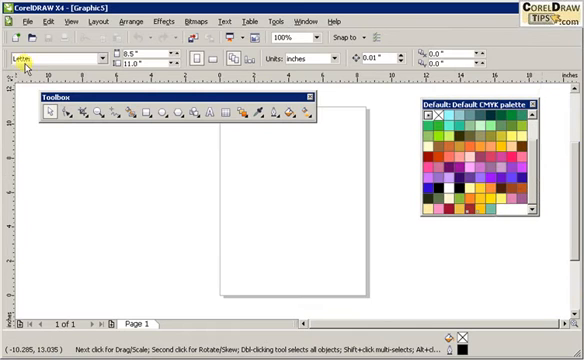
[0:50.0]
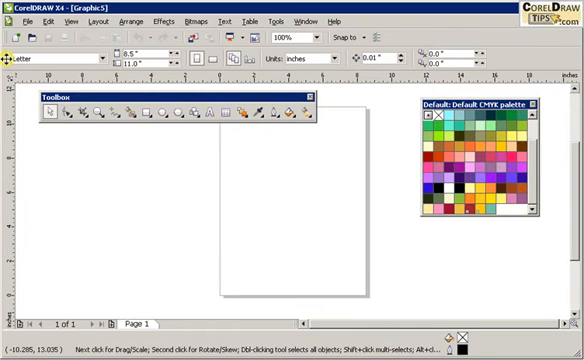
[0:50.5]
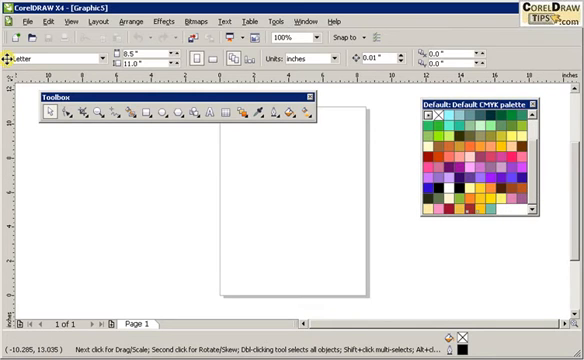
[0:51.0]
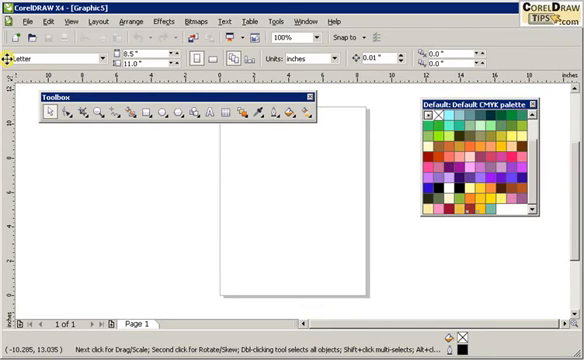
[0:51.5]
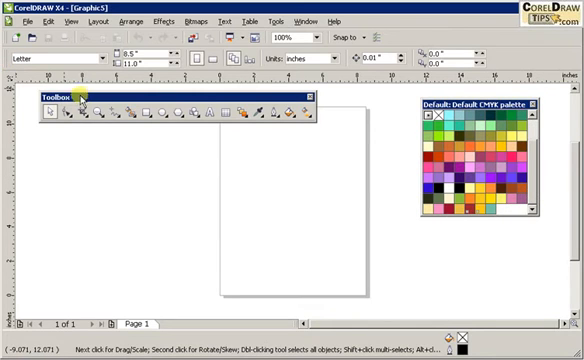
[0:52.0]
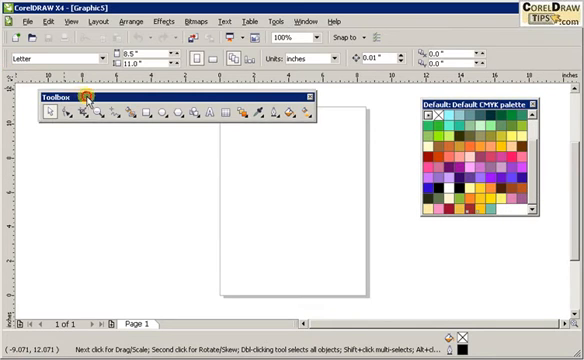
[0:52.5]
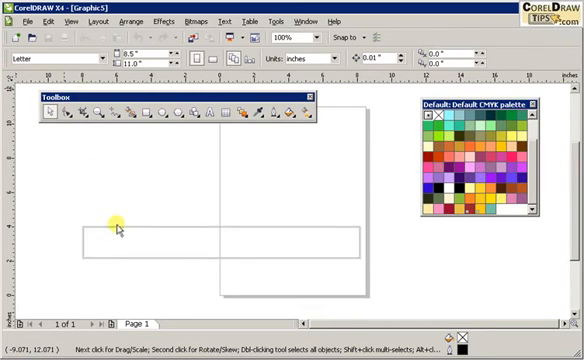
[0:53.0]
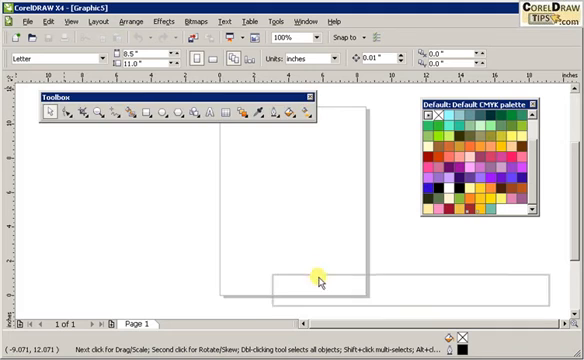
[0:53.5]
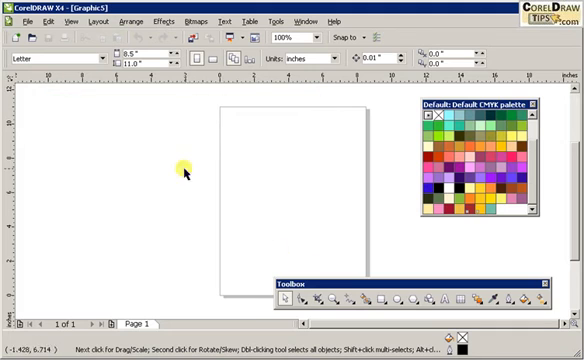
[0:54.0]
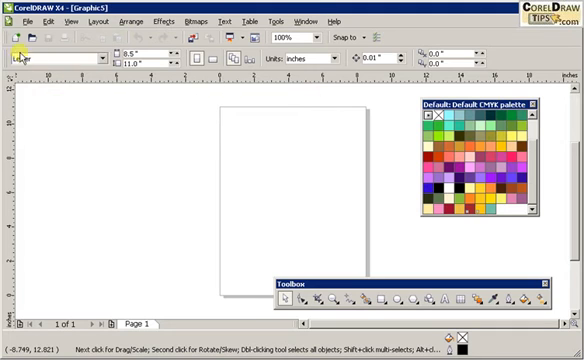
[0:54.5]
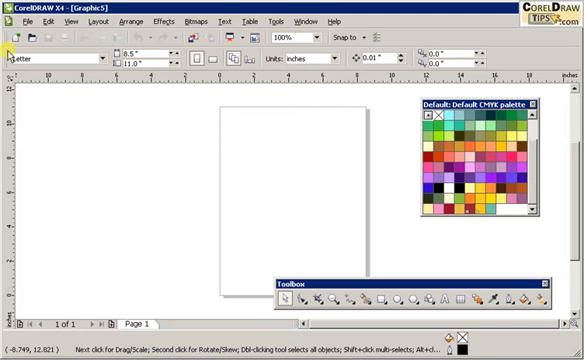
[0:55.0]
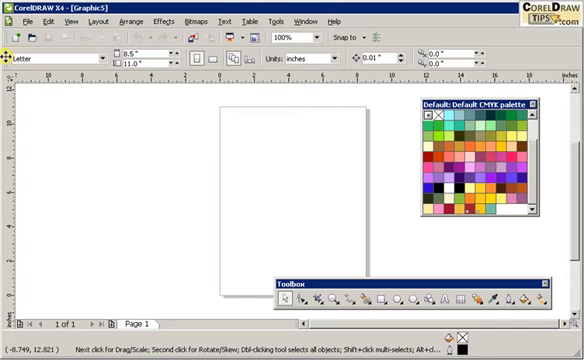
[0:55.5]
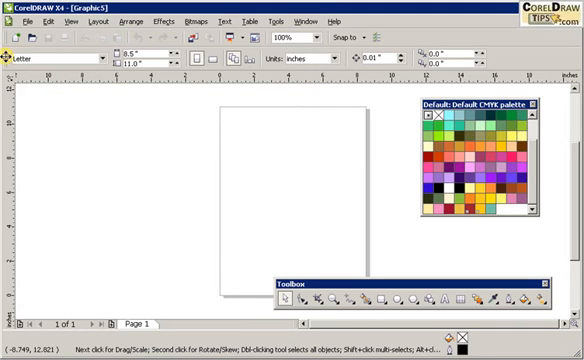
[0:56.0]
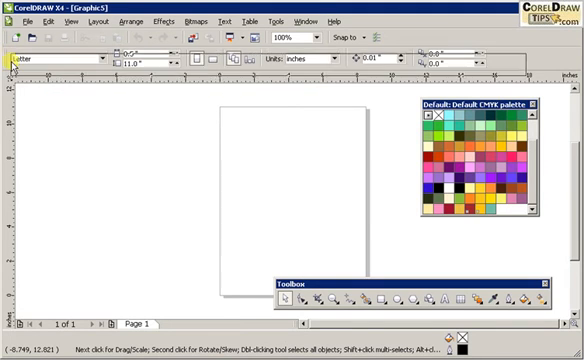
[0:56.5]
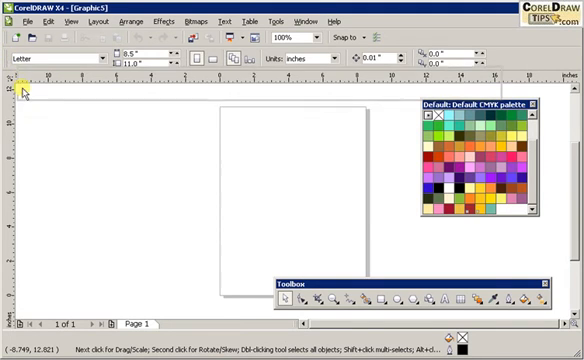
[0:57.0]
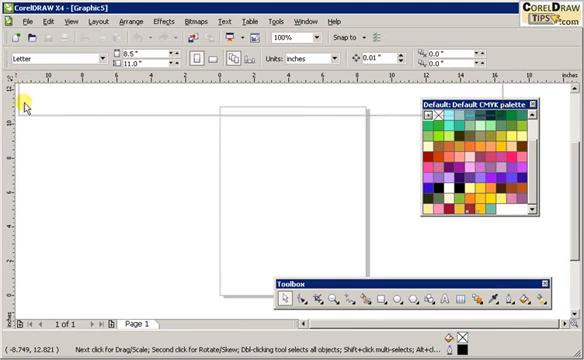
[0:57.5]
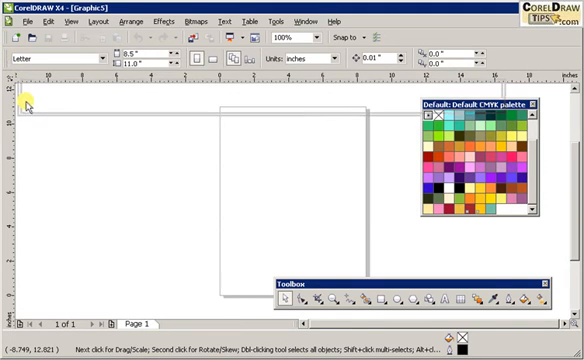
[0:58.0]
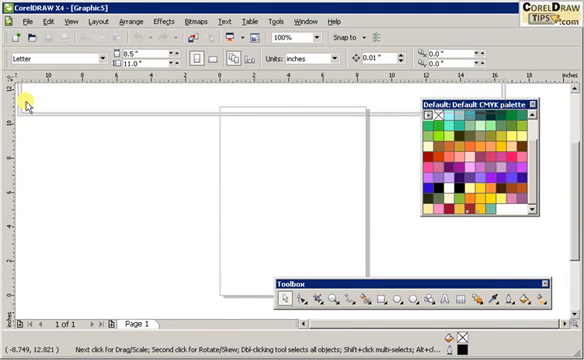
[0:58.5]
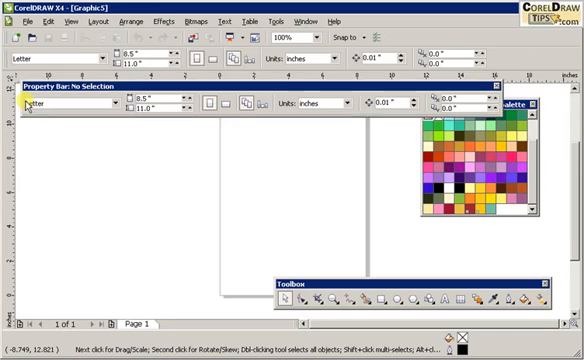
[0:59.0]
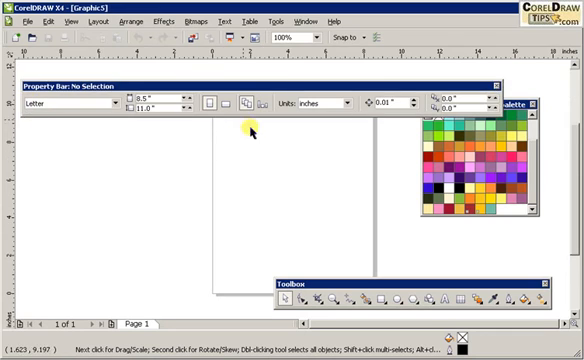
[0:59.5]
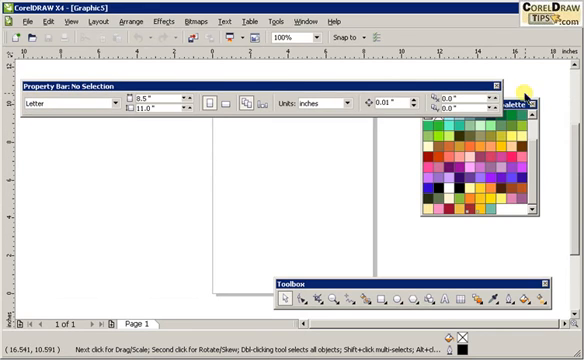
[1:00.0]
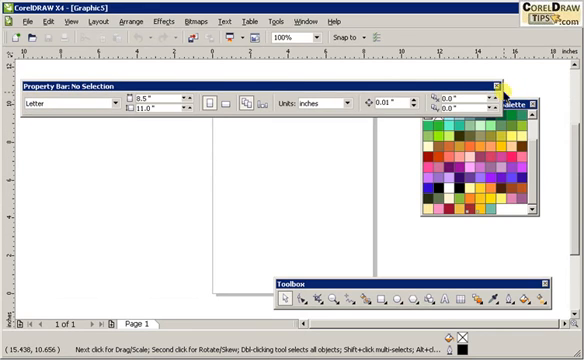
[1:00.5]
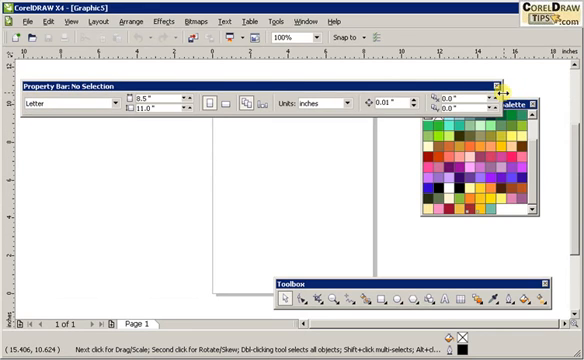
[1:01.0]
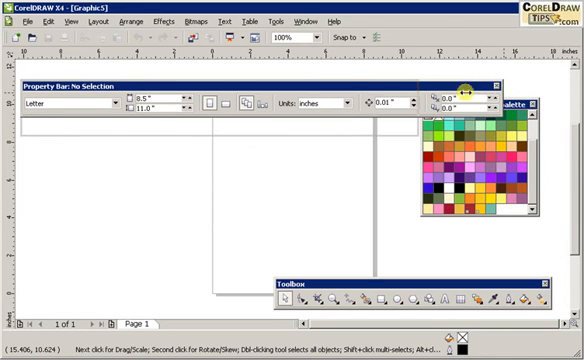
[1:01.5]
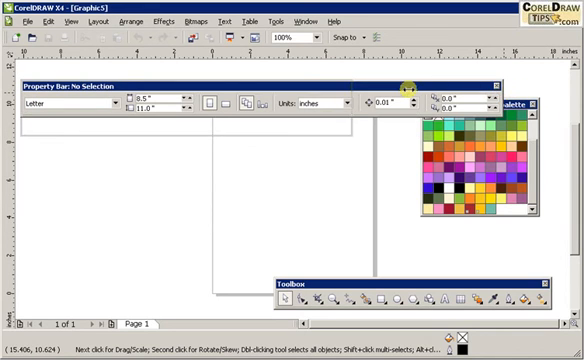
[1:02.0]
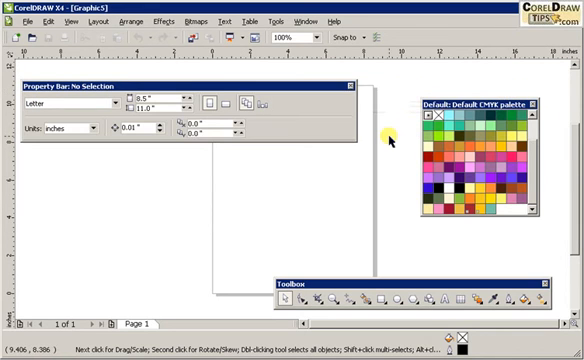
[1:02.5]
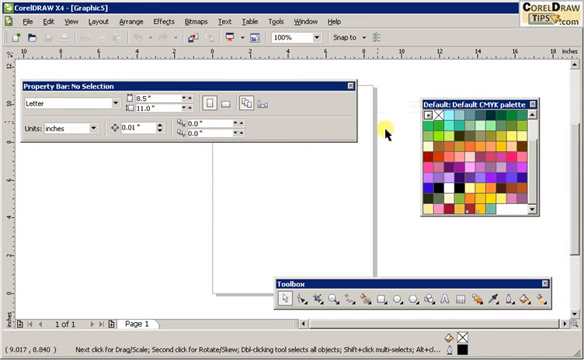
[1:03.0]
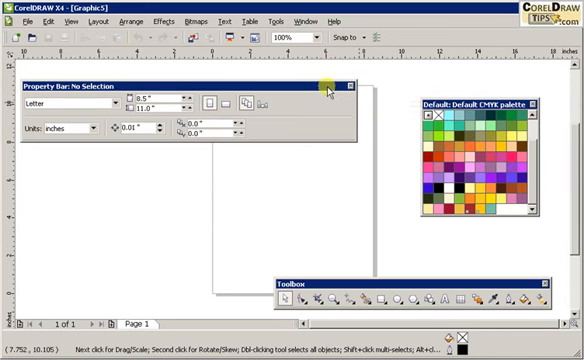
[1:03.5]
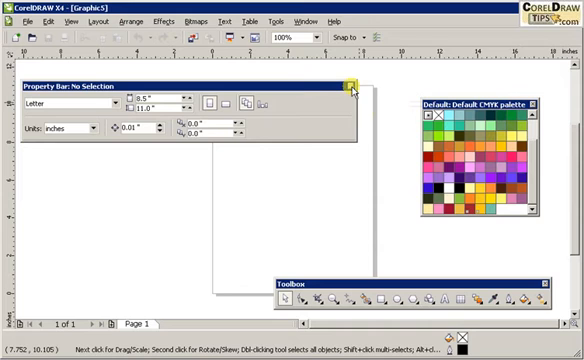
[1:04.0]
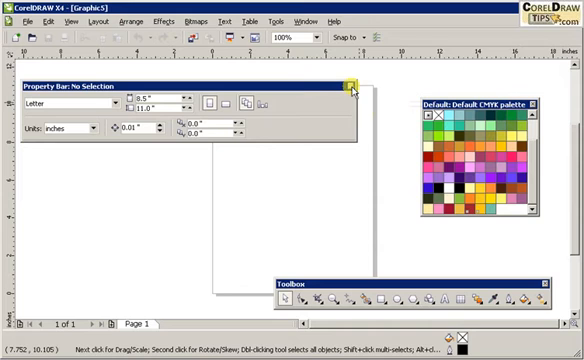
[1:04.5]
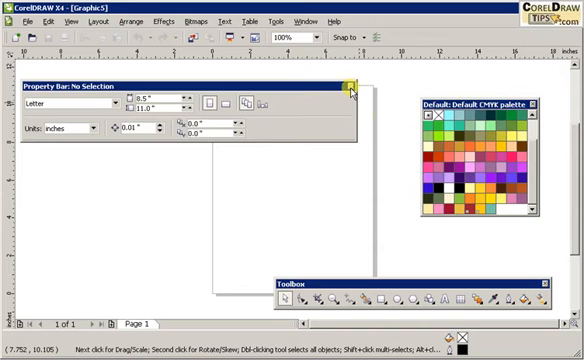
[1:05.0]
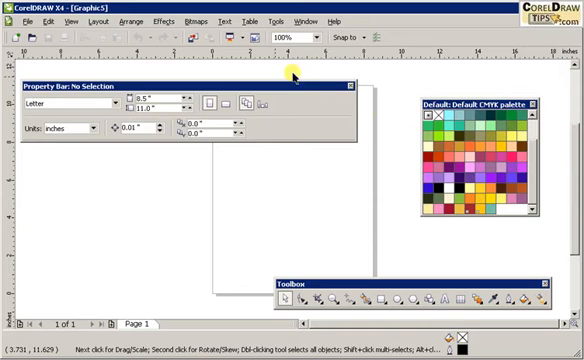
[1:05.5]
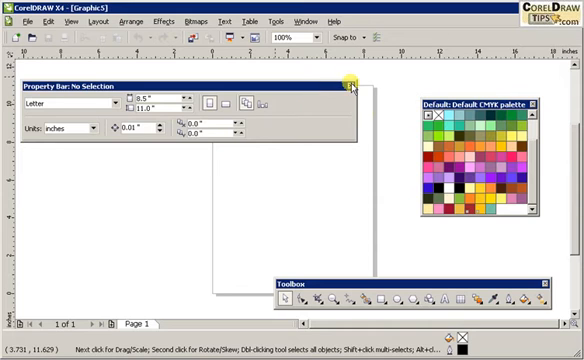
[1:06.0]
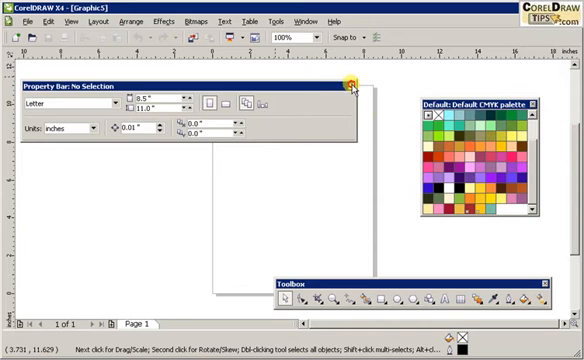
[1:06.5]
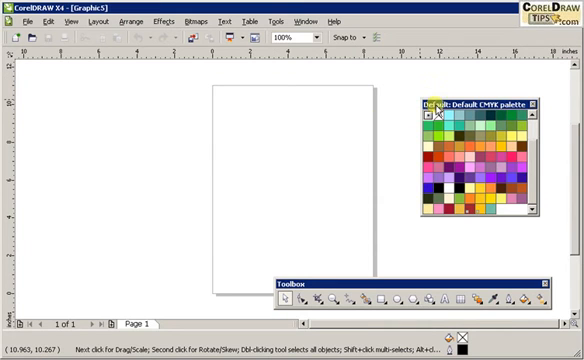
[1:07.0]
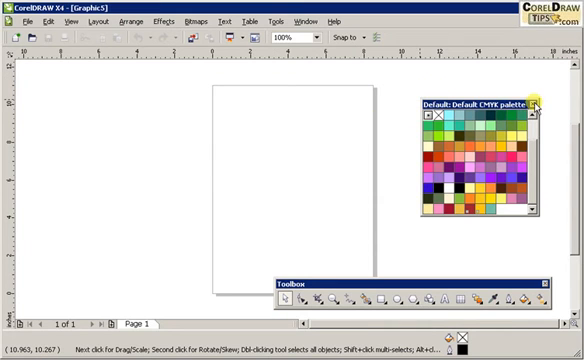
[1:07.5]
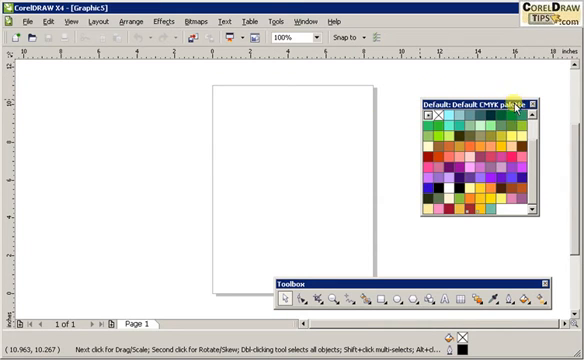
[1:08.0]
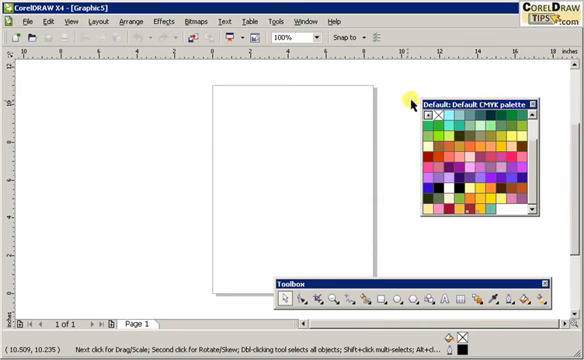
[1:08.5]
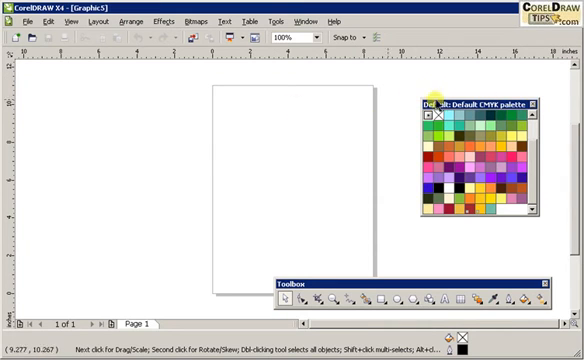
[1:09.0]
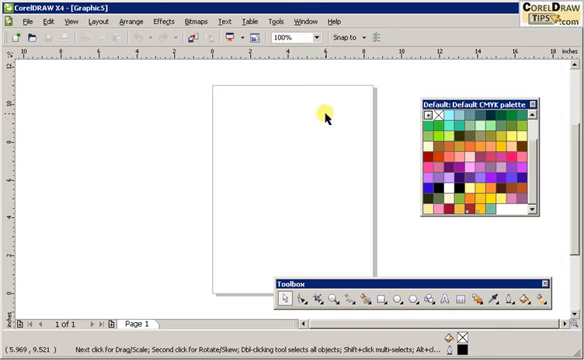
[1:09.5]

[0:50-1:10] The cursor clicks on the top bar of the toolbox and drags it down to the bottom right corner. It then picks up a bar by its edge further up the screen, in the top quarter among the toolbars, and drags it down. The blue border along the top of this bar runs from the left side of the screen, covering the top name bar and the top line of squares, up to eight across, on the color palette. The bar's top reads "property bar" and "no selection" in white font on a blue background. Below that is a box with a dropdown currently holding the option "letter". The edge is then dragged away from covering the color palette and stops just over halfway across the screen, so that instead of a single bar it becomes double width downwards. The cursor then clicks the X in the top right corner of the bar, and it closes.